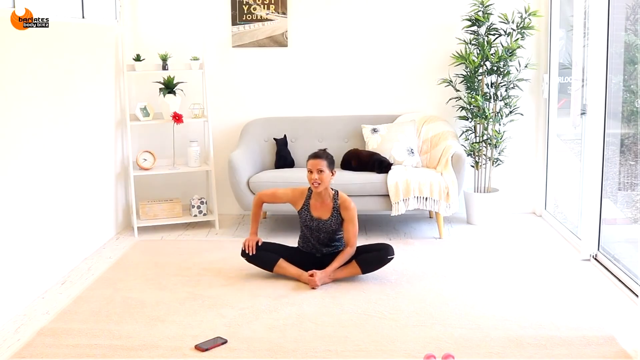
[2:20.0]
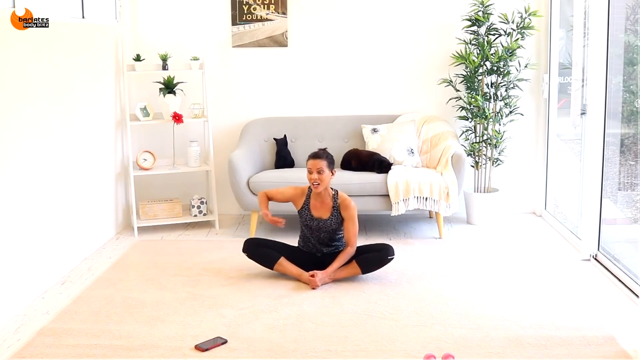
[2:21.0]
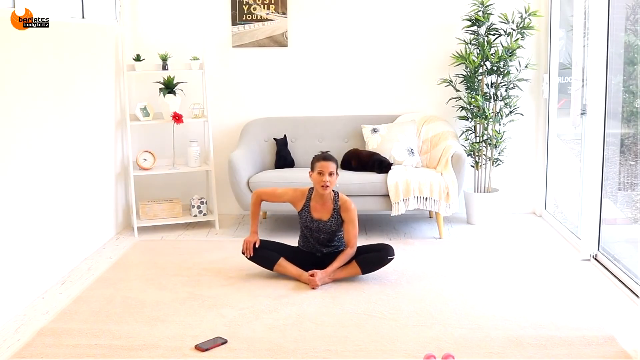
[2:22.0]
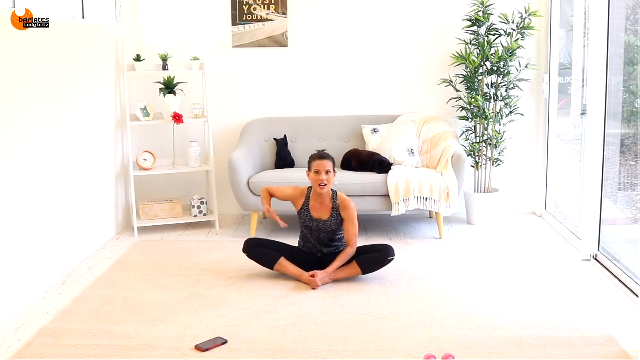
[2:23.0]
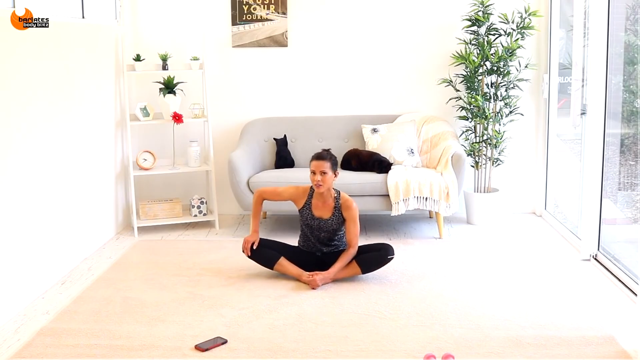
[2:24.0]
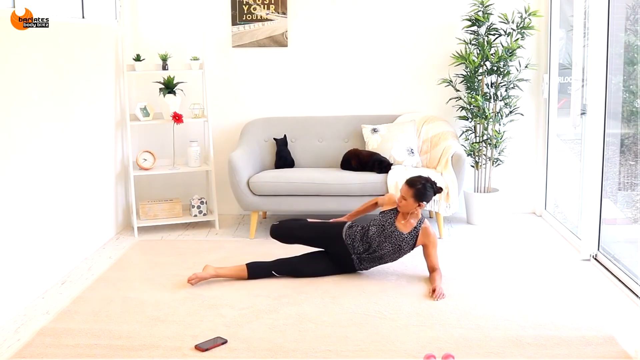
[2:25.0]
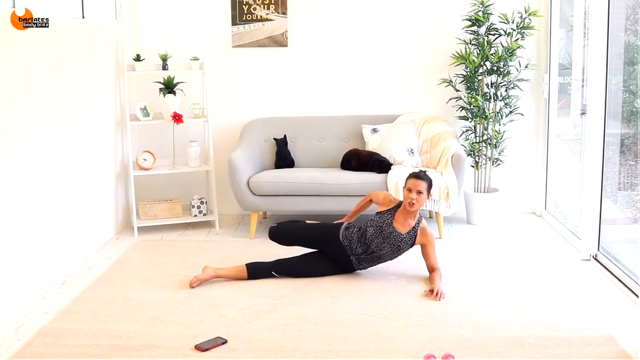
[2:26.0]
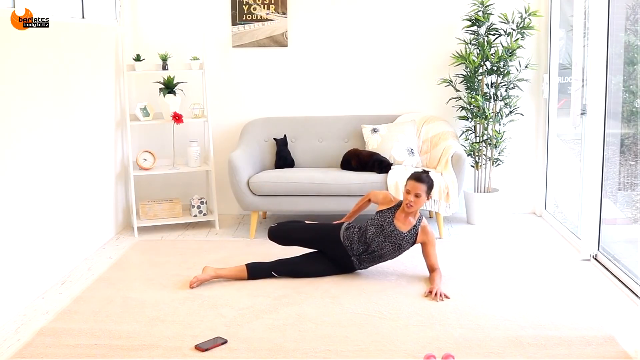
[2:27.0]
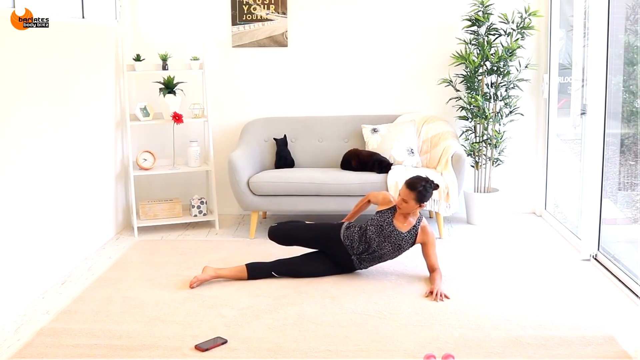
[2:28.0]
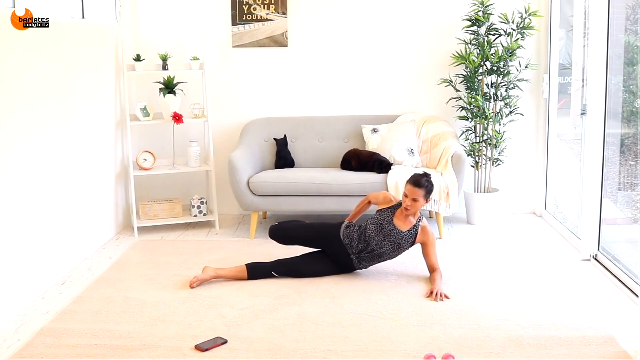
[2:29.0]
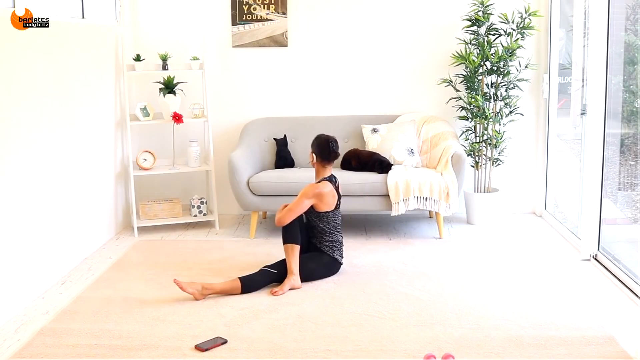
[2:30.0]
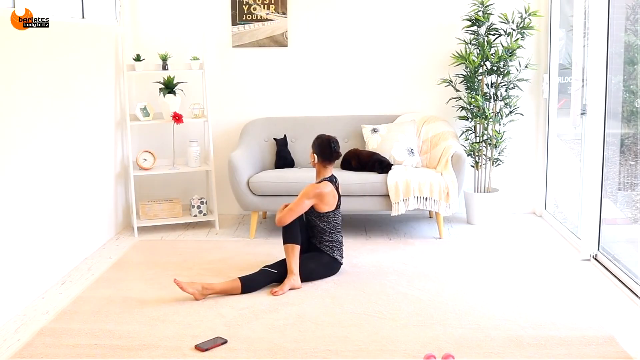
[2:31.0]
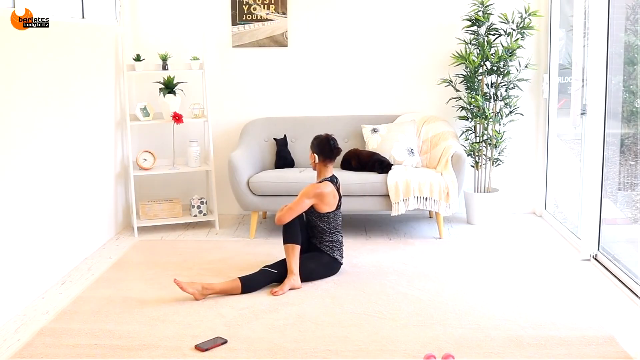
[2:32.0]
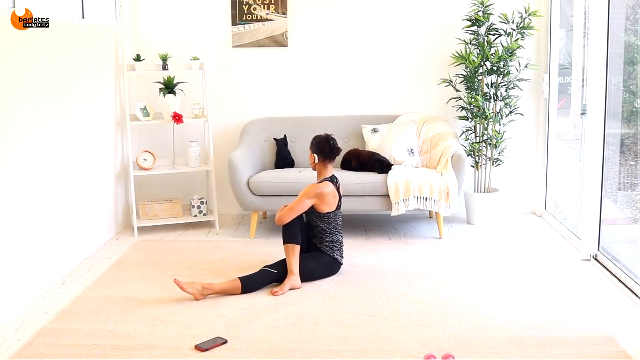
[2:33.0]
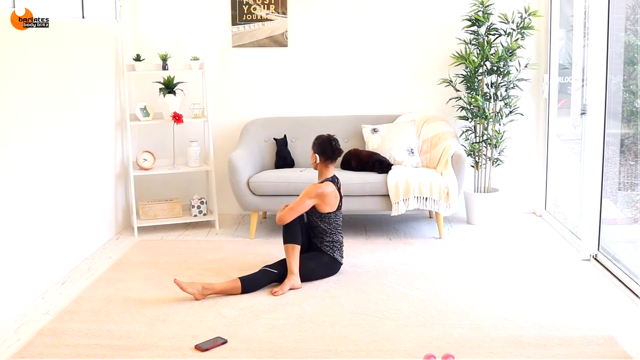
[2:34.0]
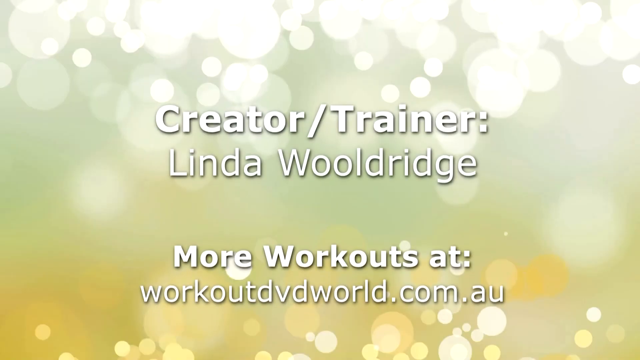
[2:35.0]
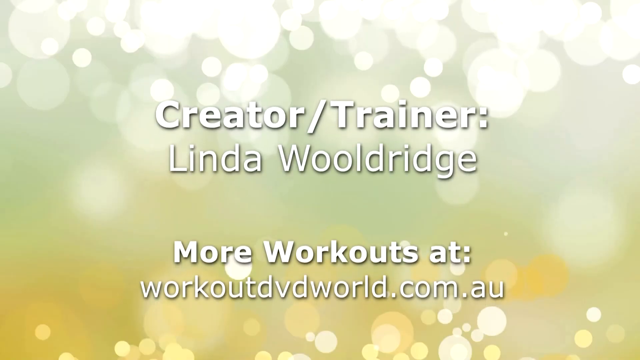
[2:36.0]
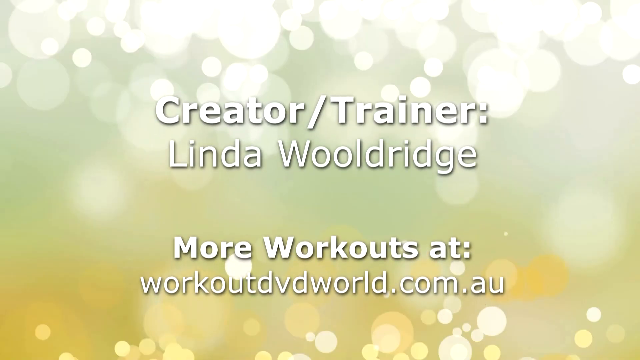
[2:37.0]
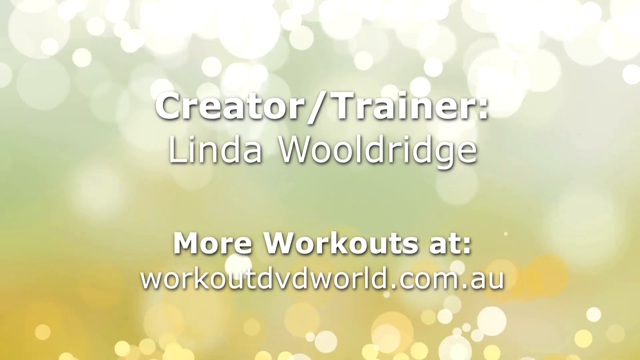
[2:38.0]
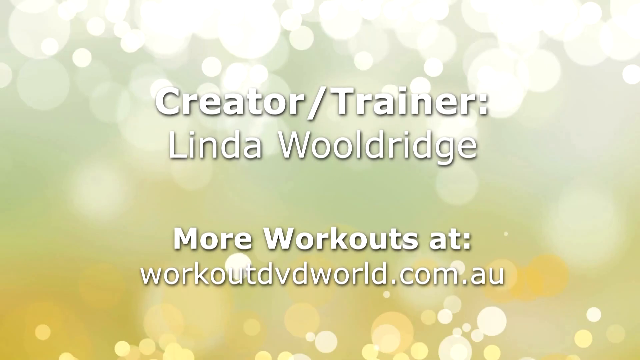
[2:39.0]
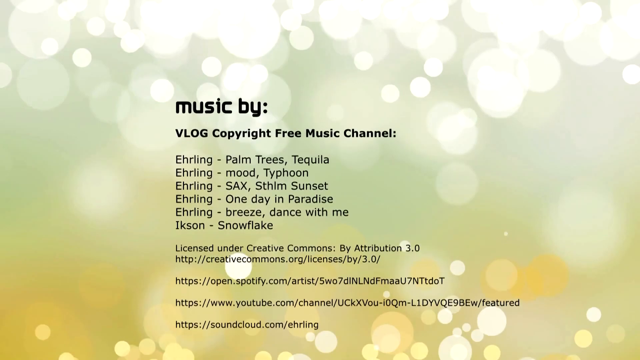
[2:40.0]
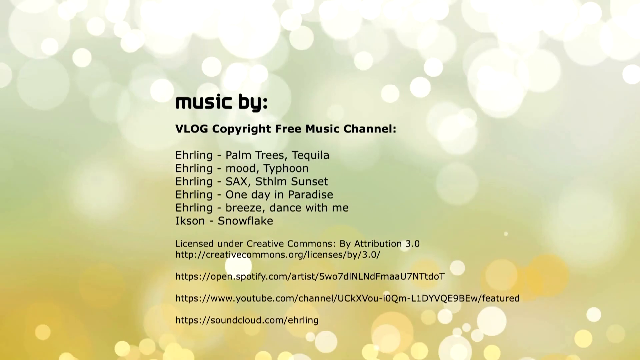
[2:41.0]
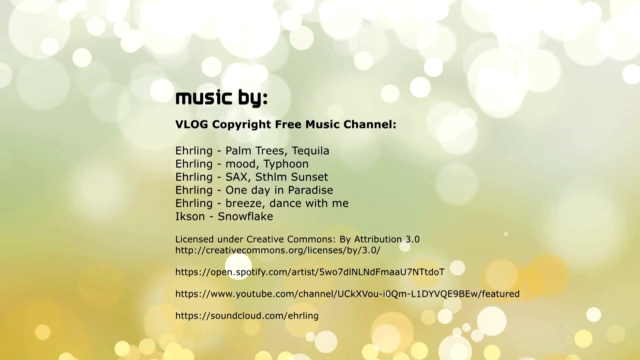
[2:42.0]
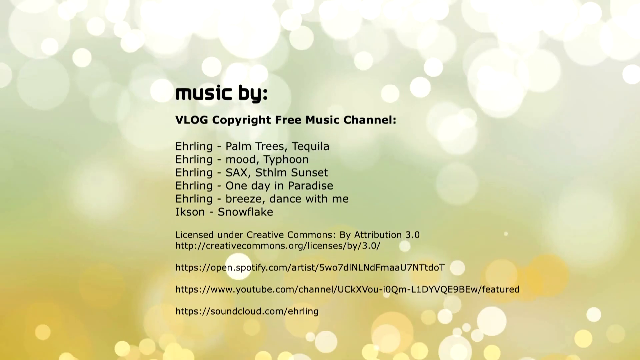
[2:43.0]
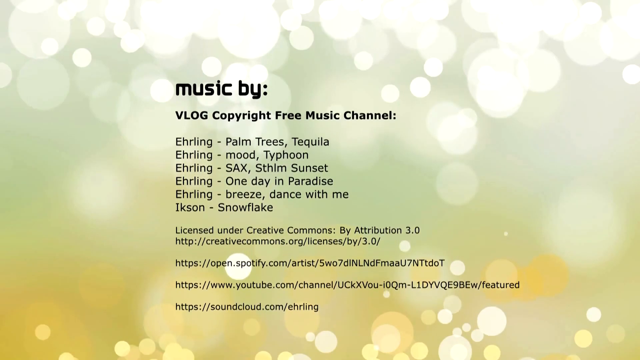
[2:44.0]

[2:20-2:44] The exercise trainer continues stretching in the butterfly position, pressing one hand on the knee on whichever side she is stretching. She looks at the camera and makes a couple of motions with her other hand, apparently to point out the form of the stretch. She then lies down on one side, brings the top leg back and grabs it with her arm for another stretch, continuing to motion to specific parts of her body, it looks like with her head or her eyes. Lastly she has one leg straight and puts the other leg over it in a bent position, seeming to hug her knee to her chest while turning away. The video ends with credits on the same background as the very beginning, giving the creator's name and then further credits.